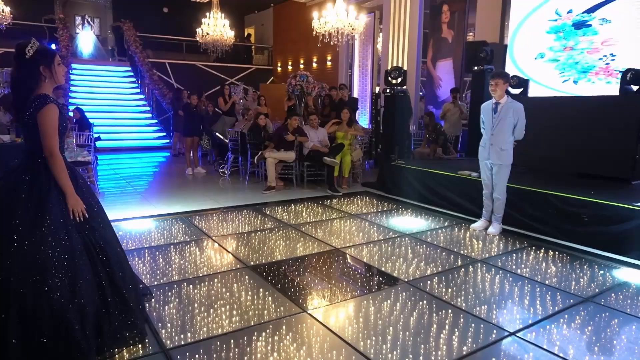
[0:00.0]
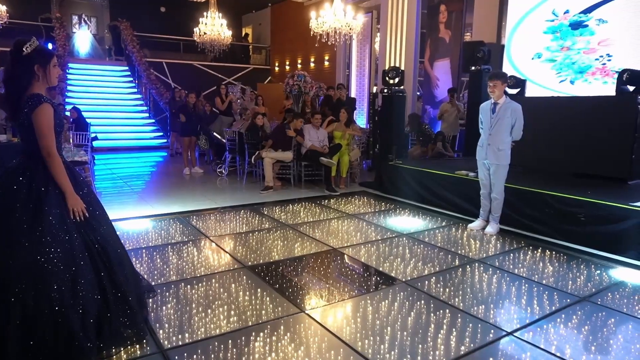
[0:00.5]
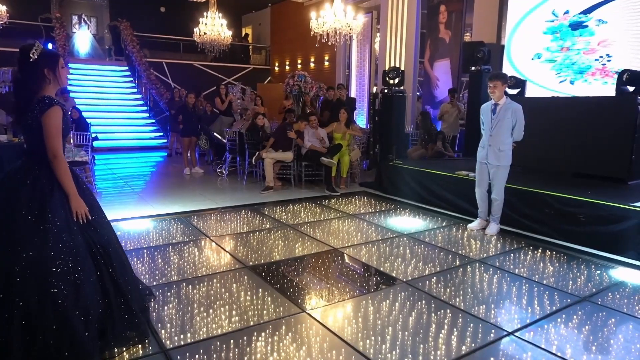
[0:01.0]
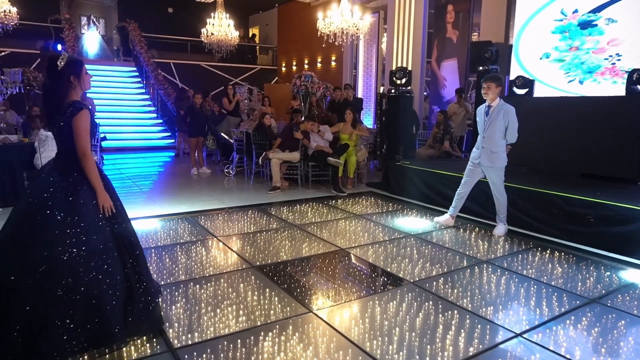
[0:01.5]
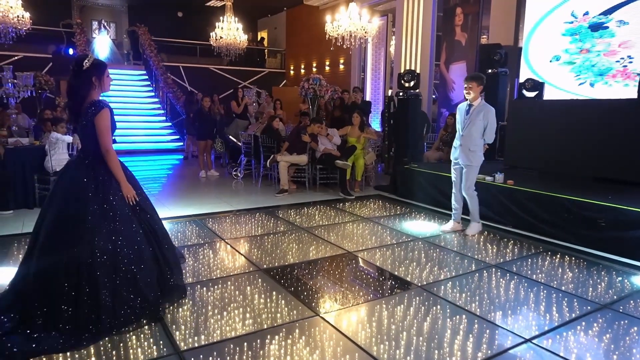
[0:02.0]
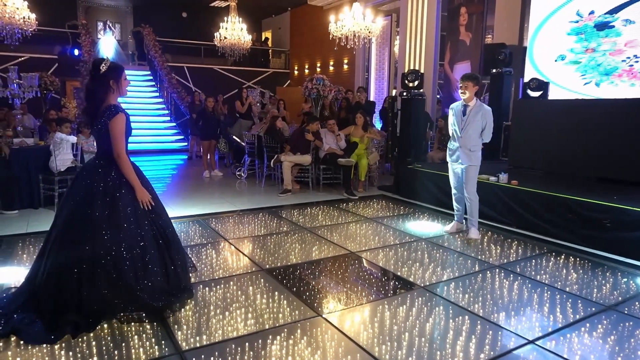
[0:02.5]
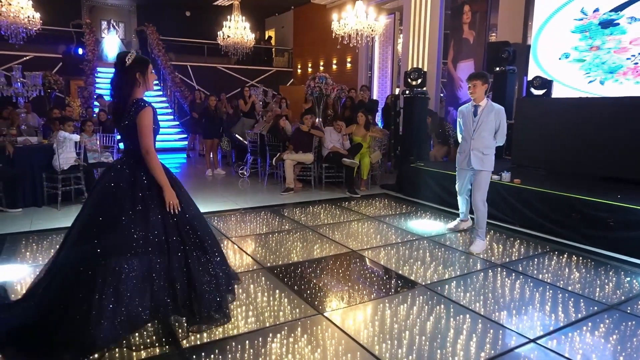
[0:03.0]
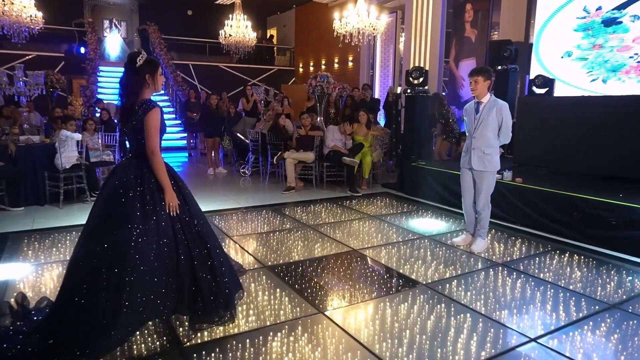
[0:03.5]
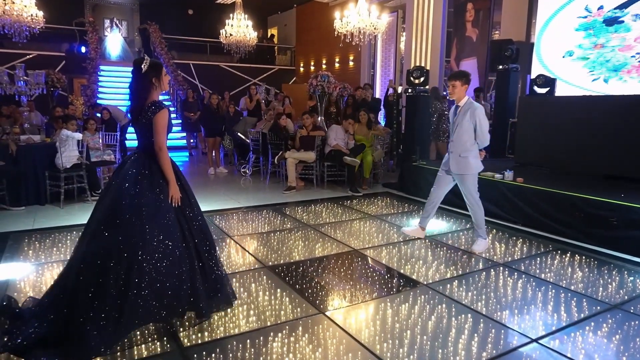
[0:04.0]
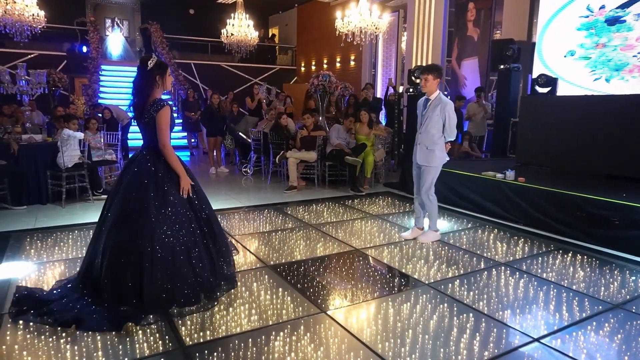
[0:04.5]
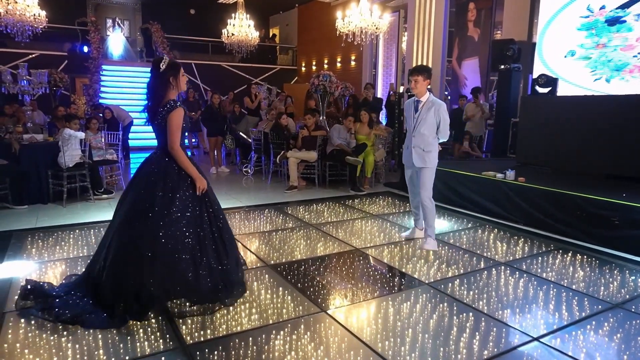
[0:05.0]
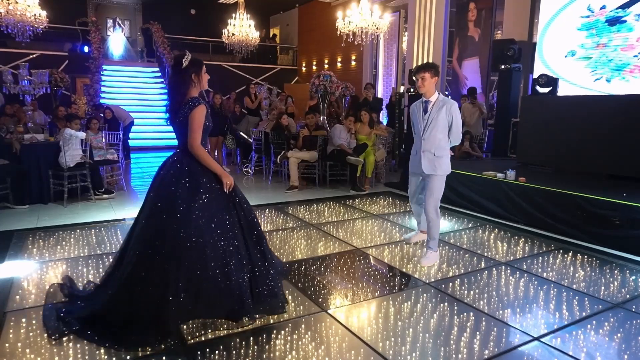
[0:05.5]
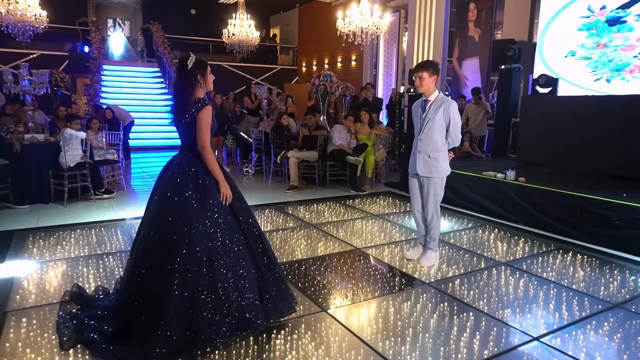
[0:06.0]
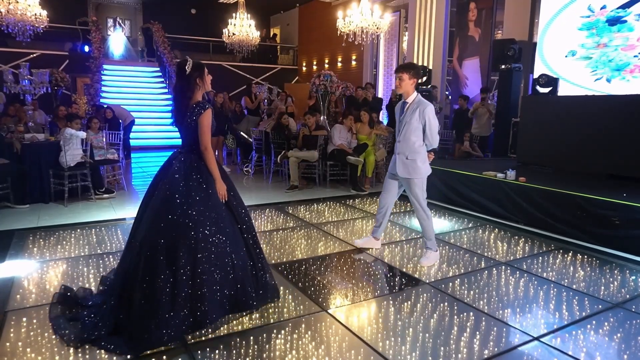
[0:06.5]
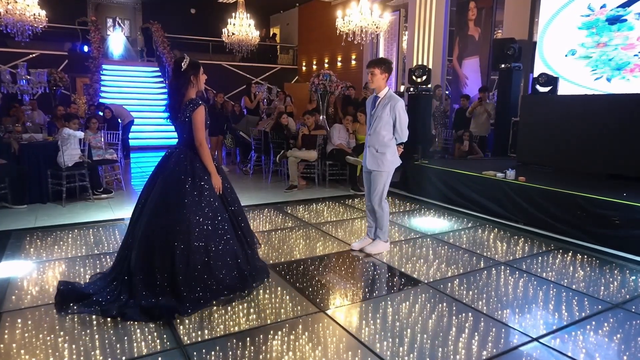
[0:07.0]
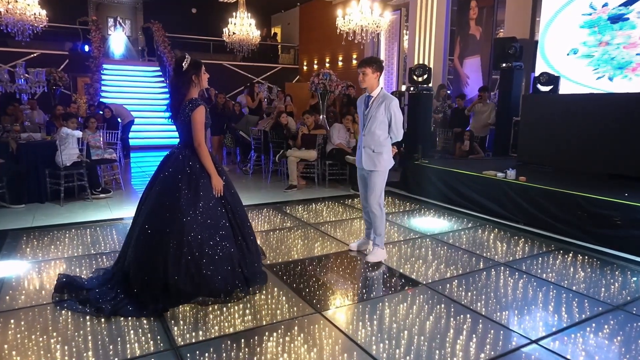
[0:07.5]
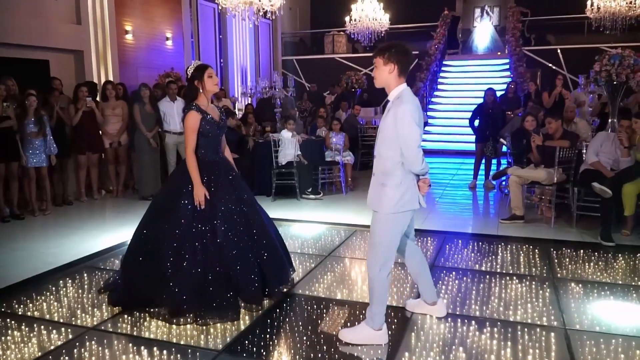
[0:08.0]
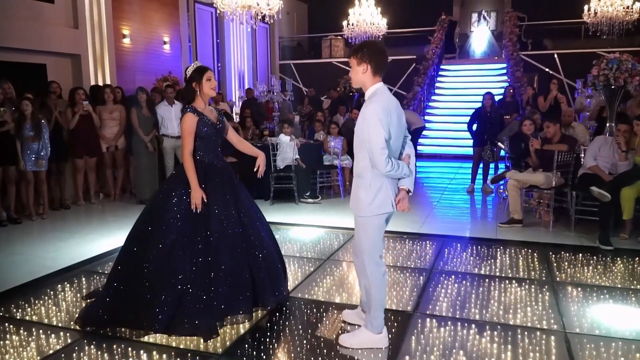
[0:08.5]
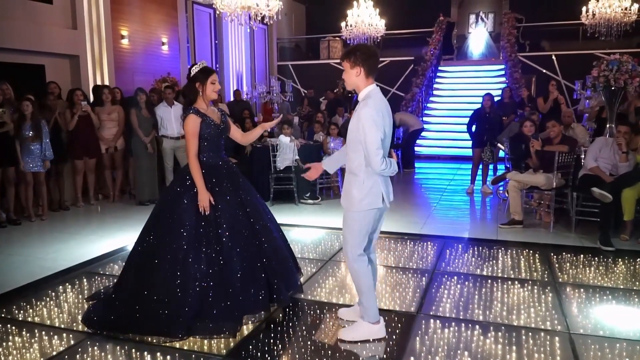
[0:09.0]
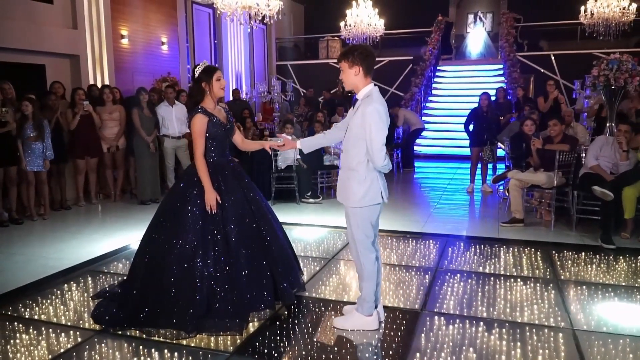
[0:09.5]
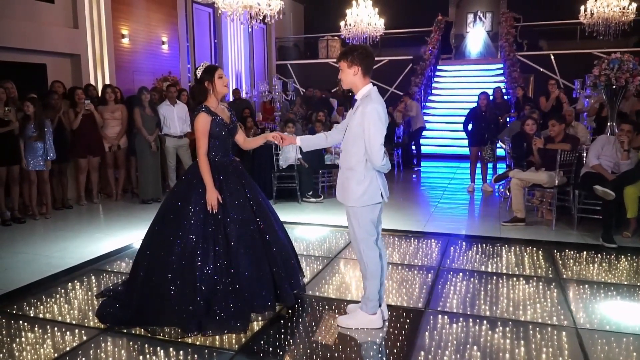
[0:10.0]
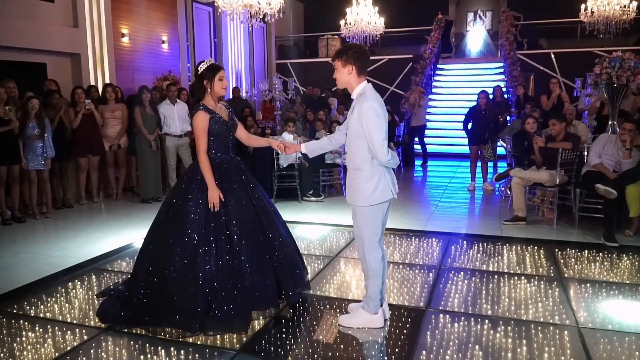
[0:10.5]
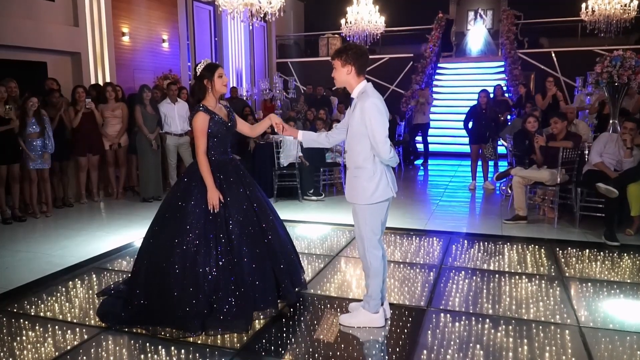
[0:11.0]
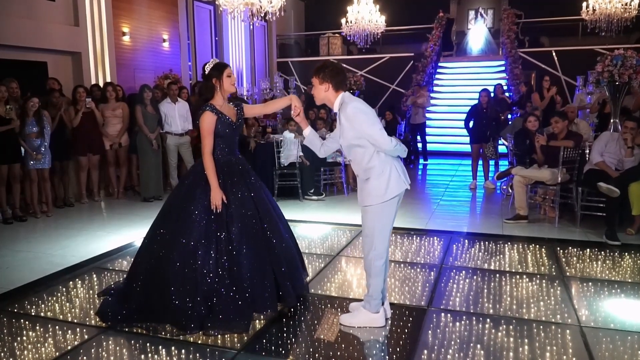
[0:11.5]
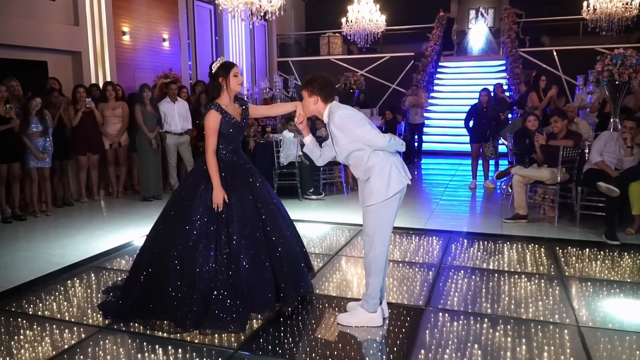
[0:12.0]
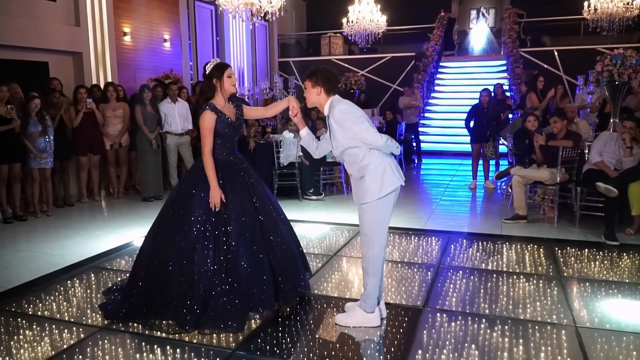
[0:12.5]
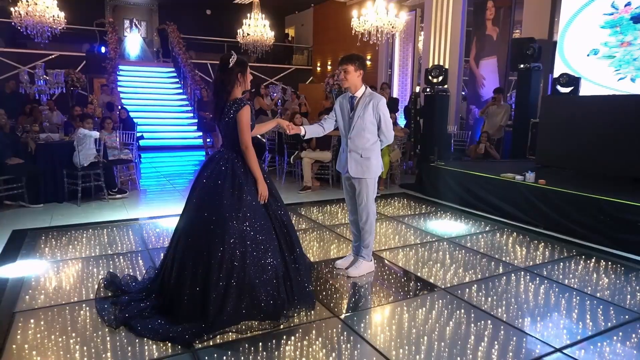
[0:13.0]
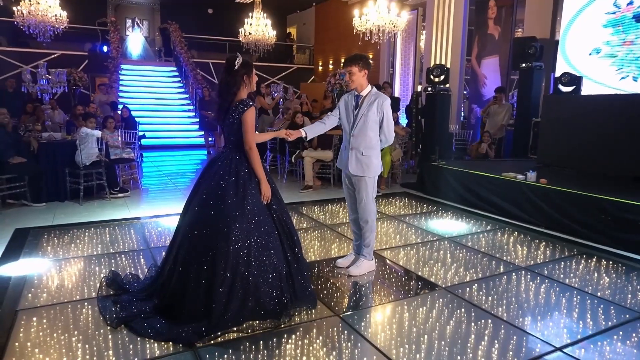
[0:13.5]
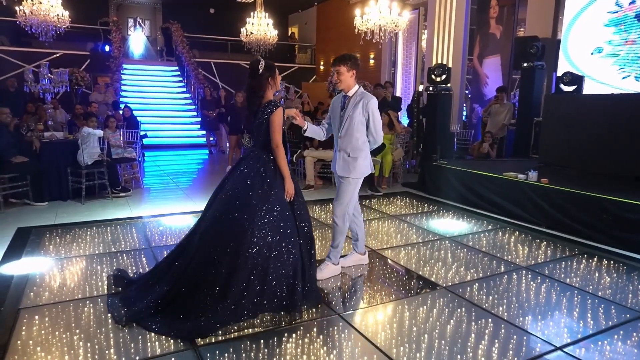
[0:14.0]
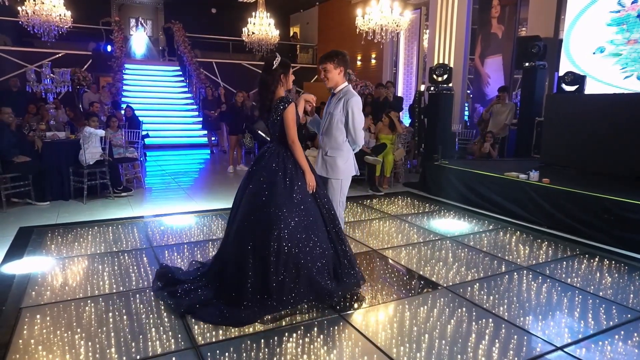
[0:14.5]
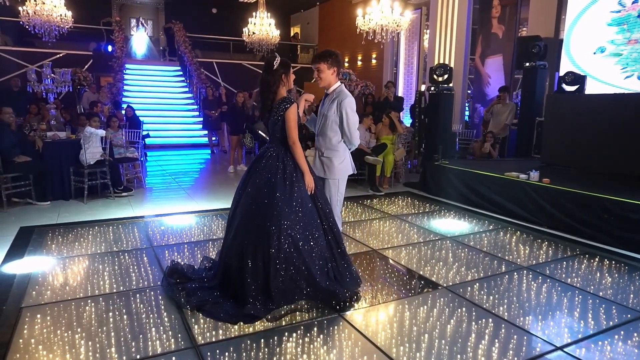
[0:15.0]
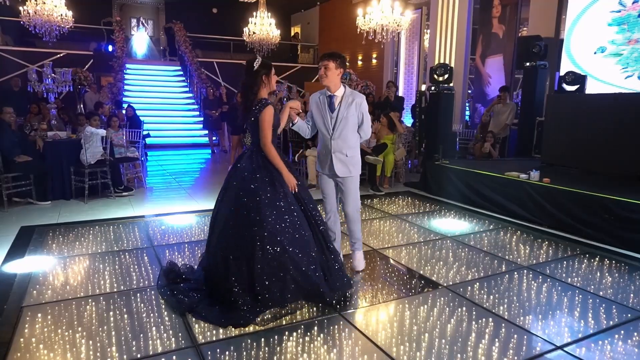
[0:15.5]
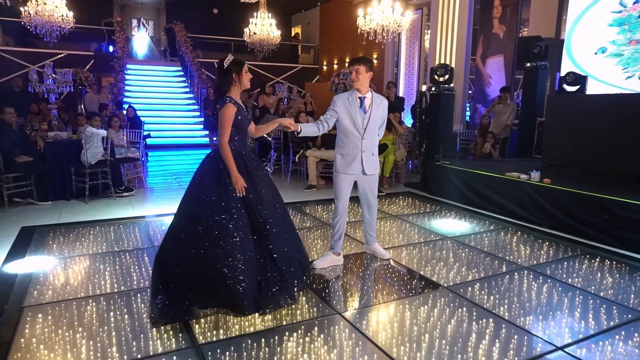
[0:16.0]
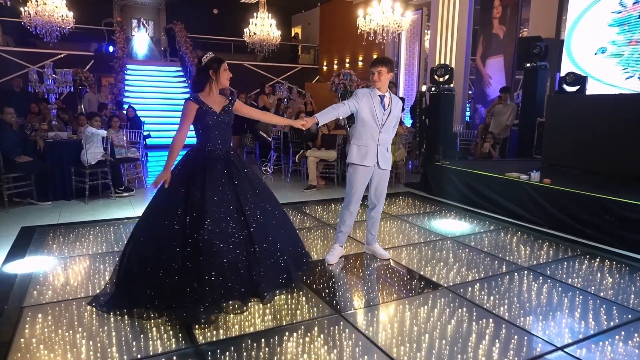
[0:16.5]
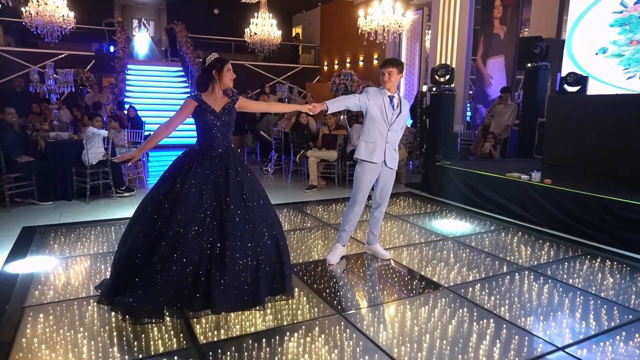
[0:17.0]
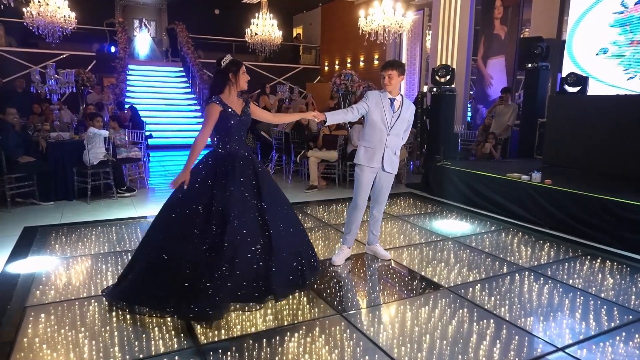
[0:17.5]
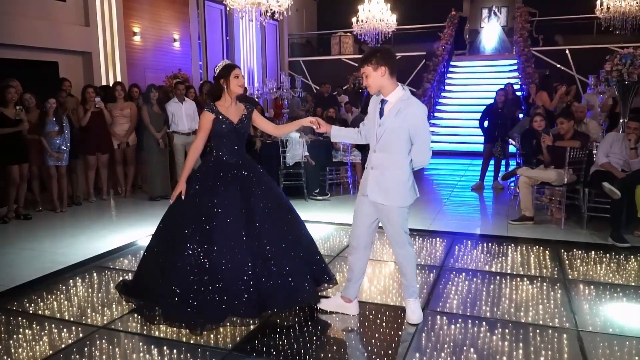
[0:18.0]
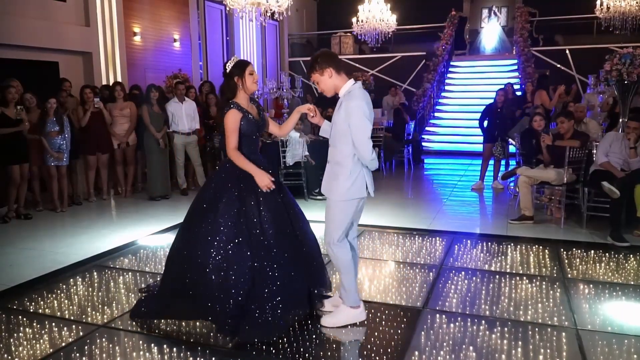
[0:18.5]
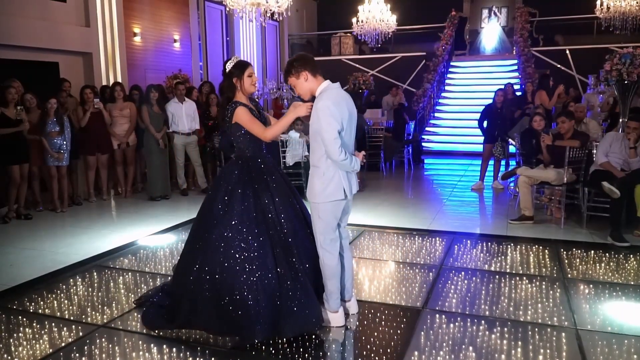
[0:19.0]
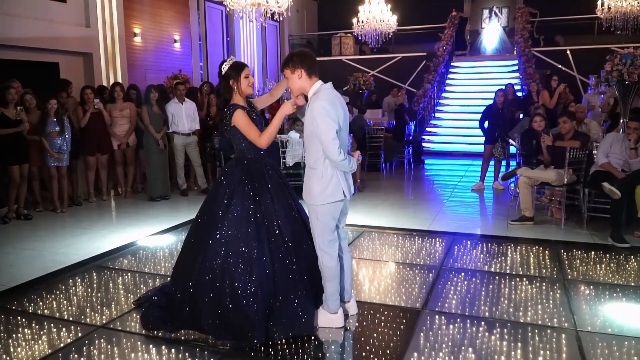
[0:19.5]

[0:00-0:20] Two people appear to be taking part in some type of ceremony. A stage is in the middle of the floor; its top is made of glass with lights underneath, so it is a custom stage. The lady on the left and the man on the right look young, either teenagers or maybe 20 or 21 at the most. The girl wears a tiara and a dark blue flowing dress, and the man wears a light blue suit and tie. They seem to make some type of ceremonial gesture toward each other as they move closer together on the stage, not quite walking and not quite dancing. The girl gives the boy her hand and he kisses it. They move closer and then farther apart as they slowly dance on the stage.